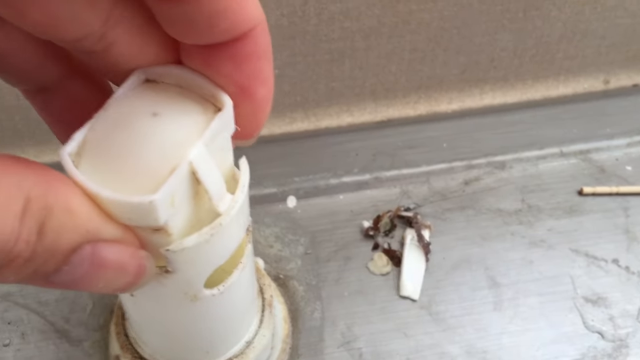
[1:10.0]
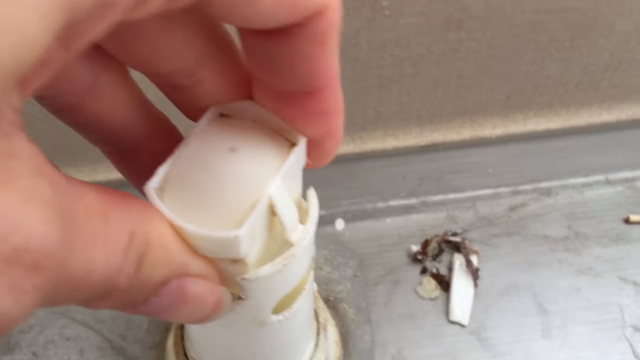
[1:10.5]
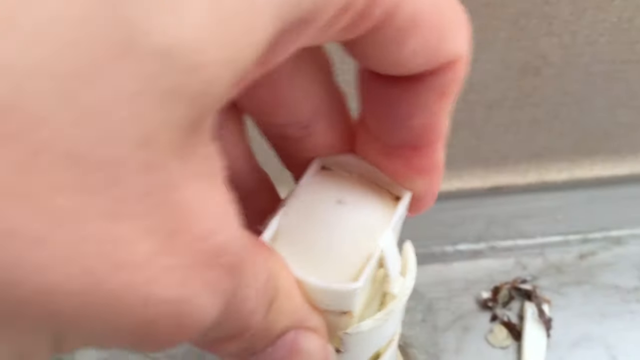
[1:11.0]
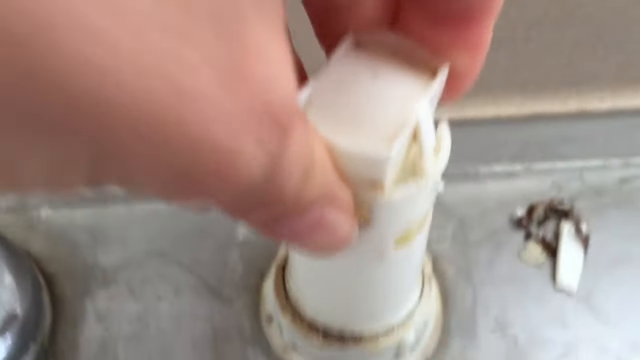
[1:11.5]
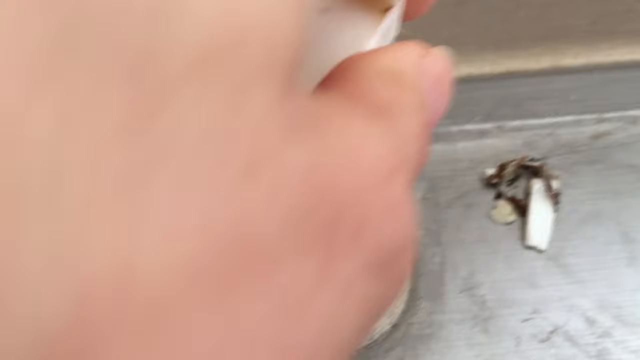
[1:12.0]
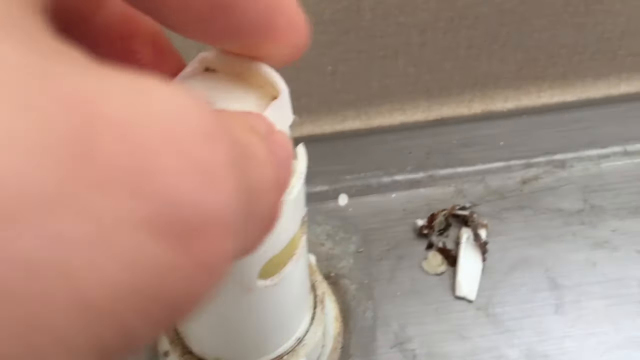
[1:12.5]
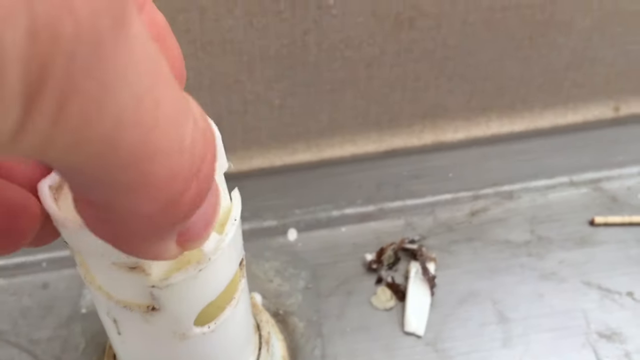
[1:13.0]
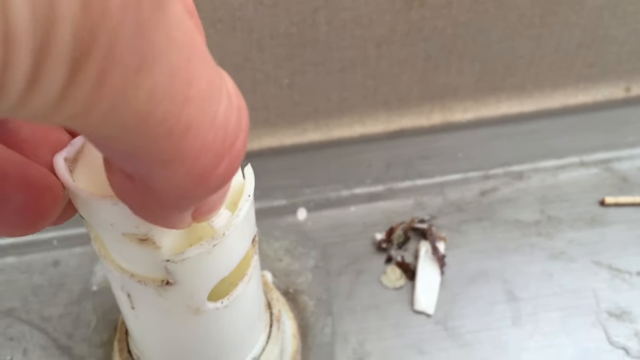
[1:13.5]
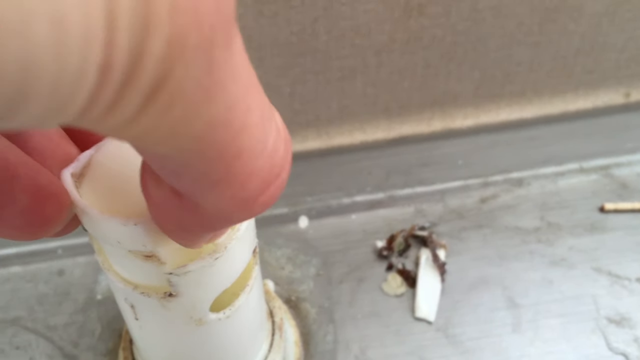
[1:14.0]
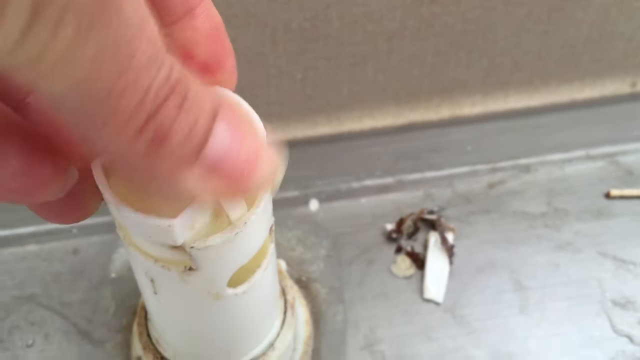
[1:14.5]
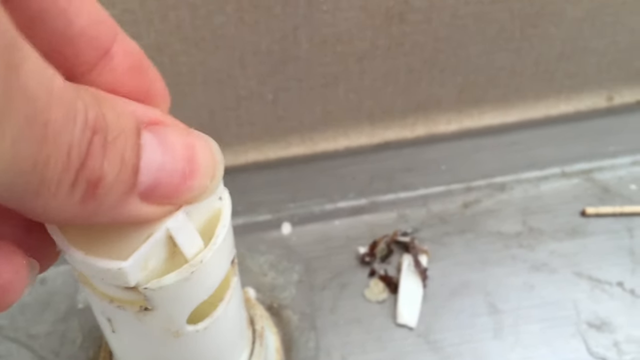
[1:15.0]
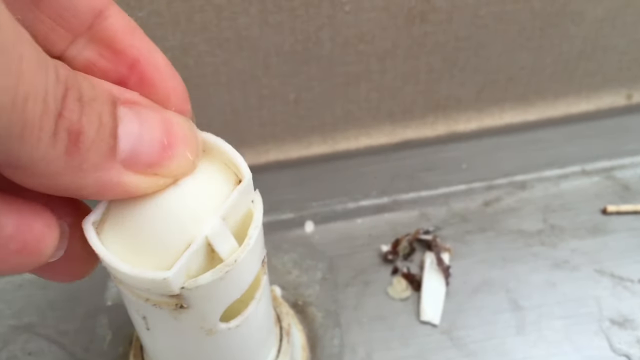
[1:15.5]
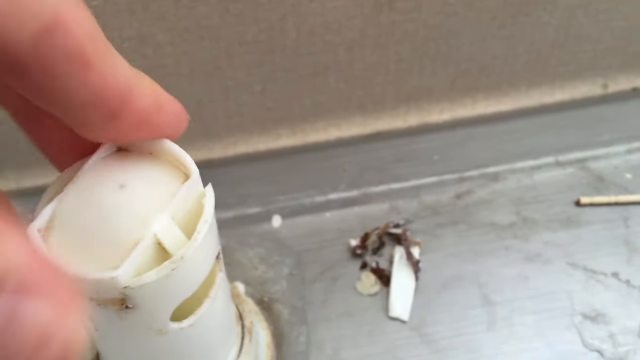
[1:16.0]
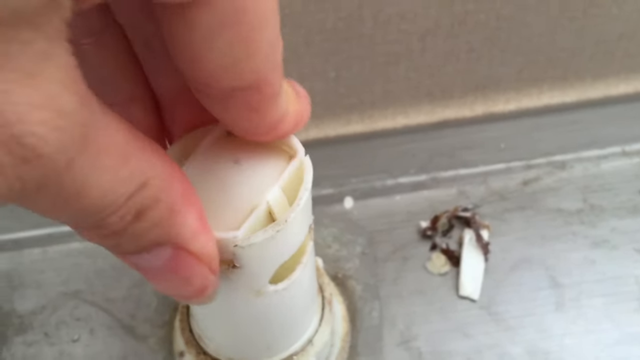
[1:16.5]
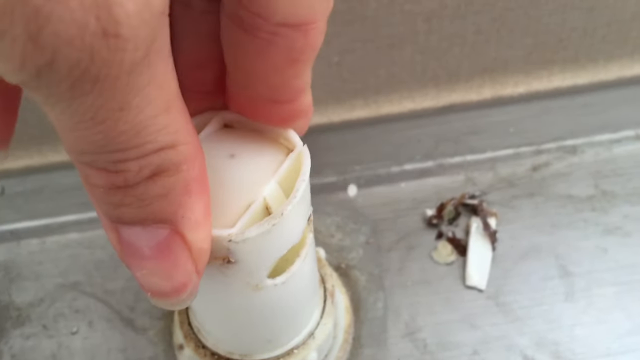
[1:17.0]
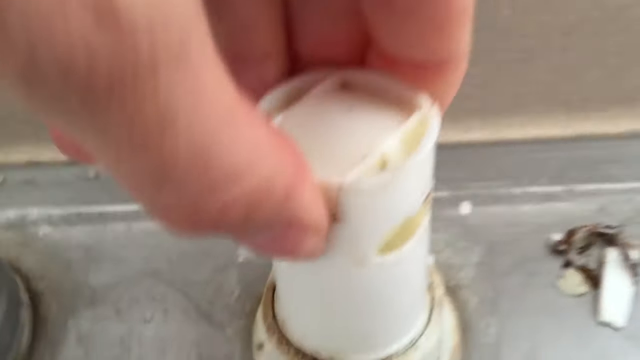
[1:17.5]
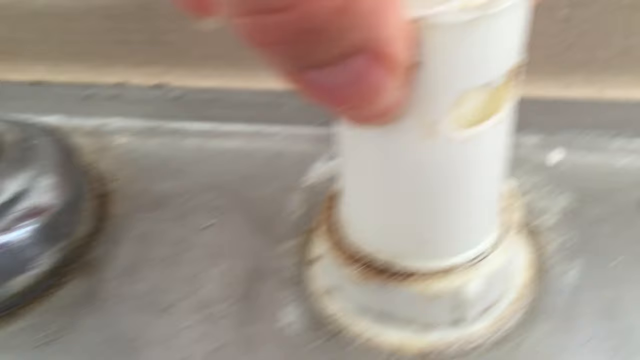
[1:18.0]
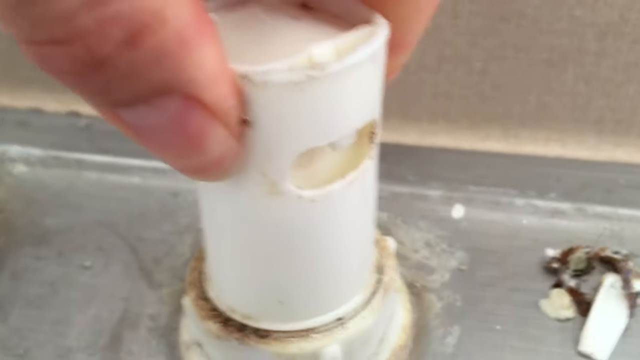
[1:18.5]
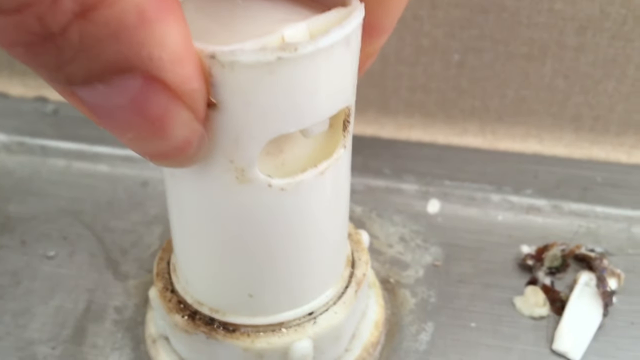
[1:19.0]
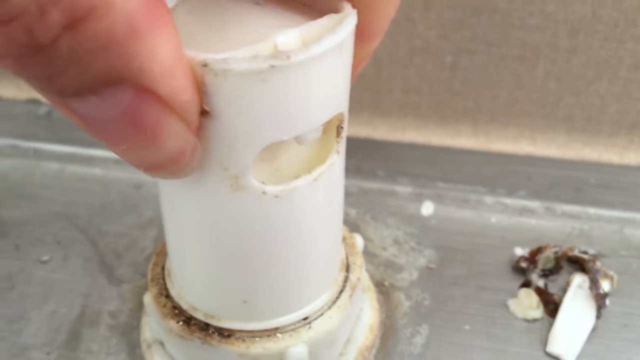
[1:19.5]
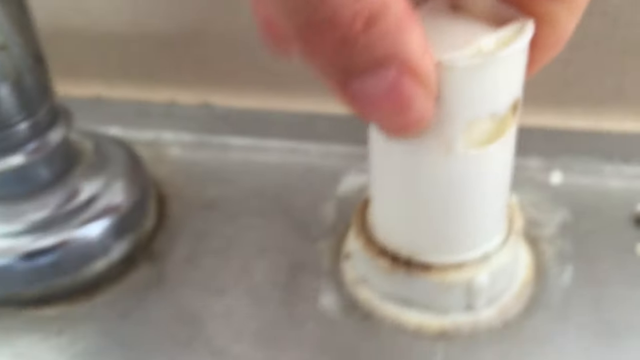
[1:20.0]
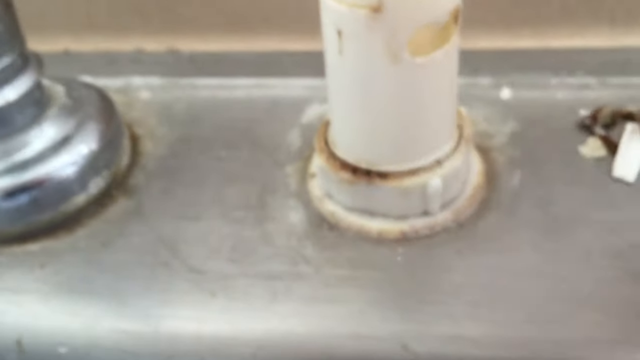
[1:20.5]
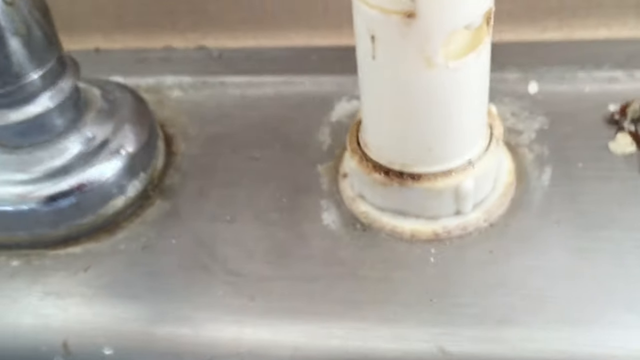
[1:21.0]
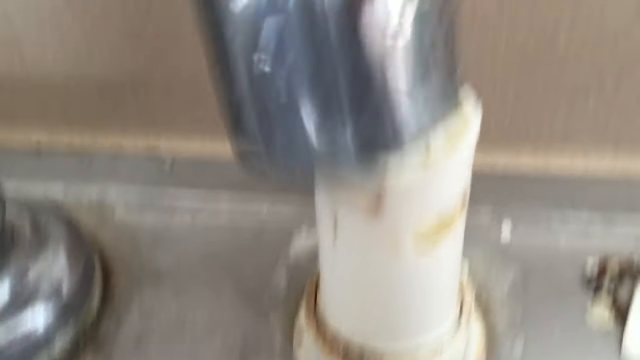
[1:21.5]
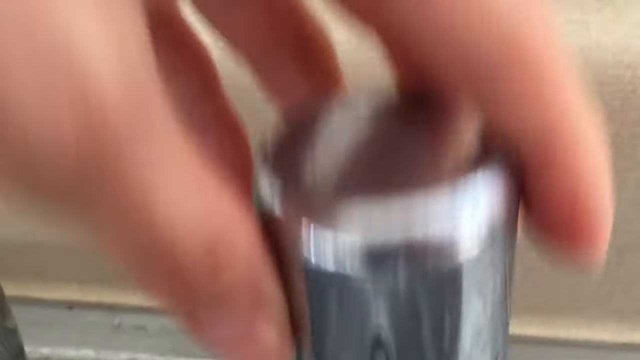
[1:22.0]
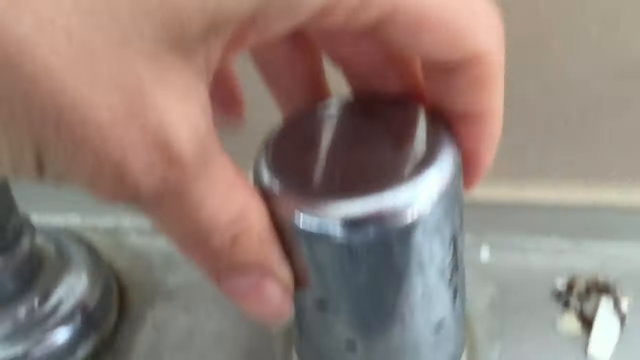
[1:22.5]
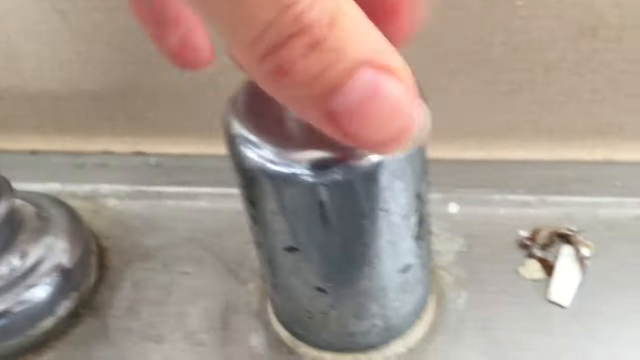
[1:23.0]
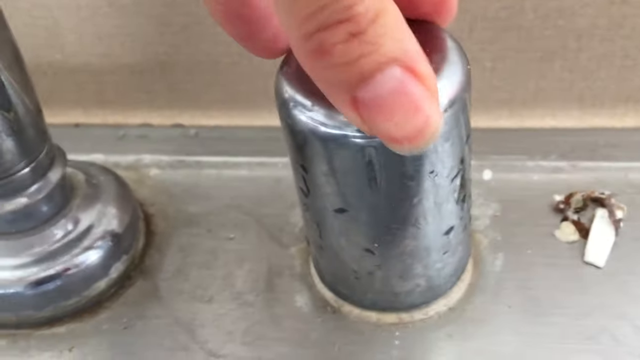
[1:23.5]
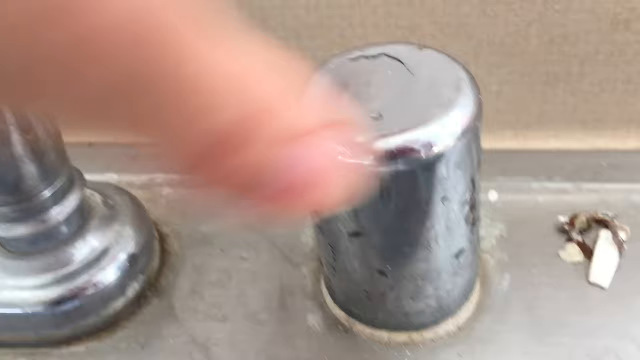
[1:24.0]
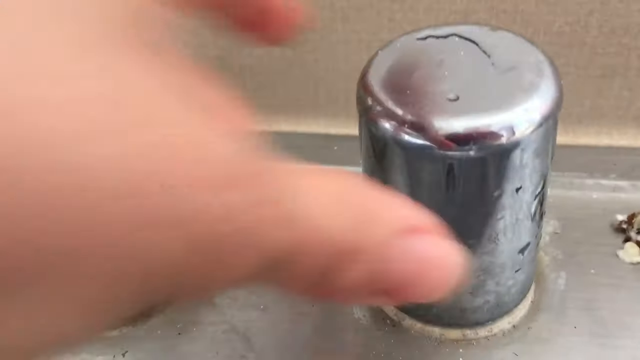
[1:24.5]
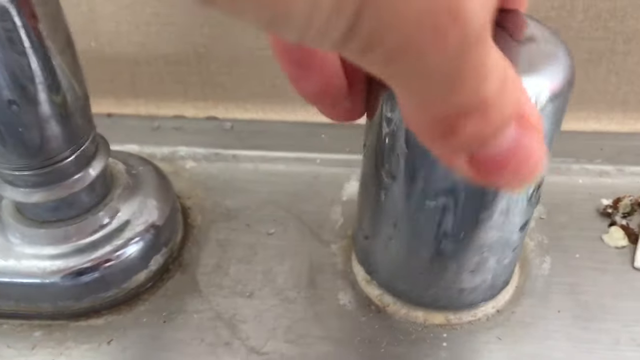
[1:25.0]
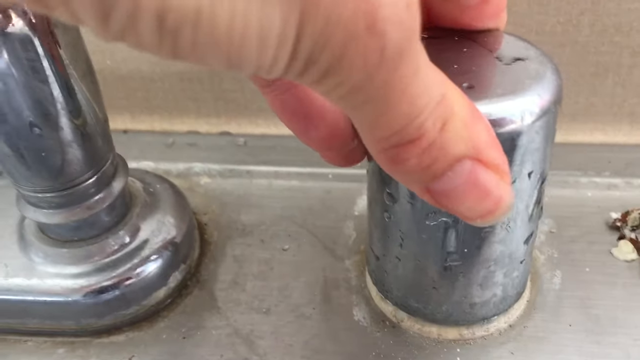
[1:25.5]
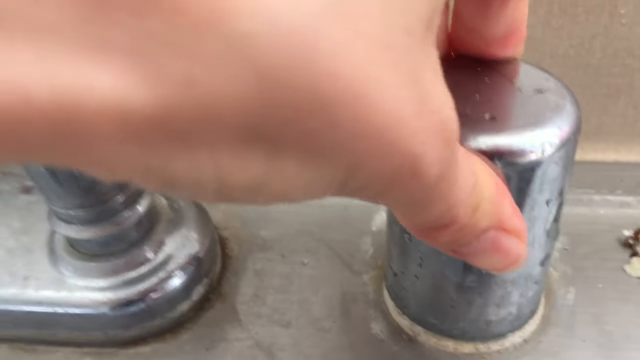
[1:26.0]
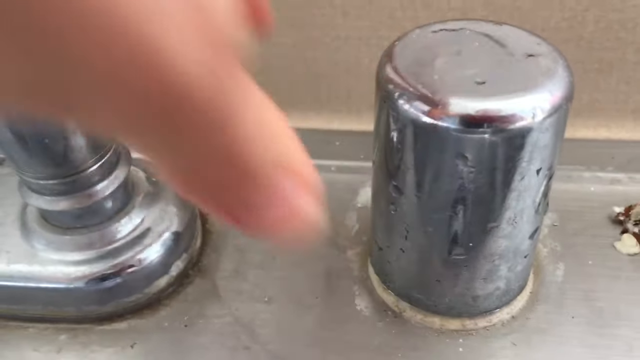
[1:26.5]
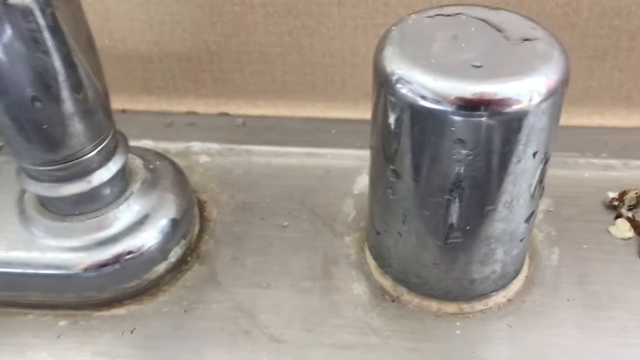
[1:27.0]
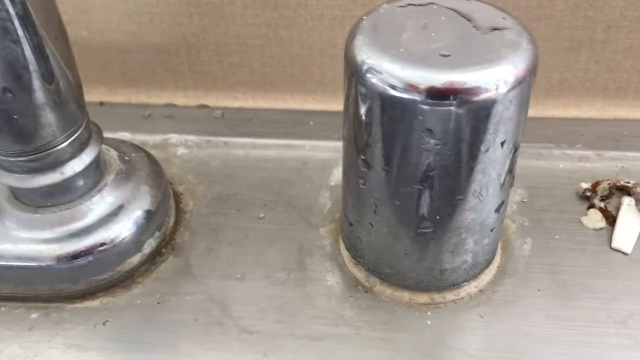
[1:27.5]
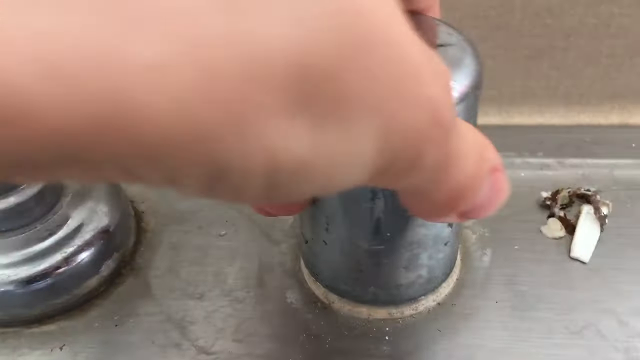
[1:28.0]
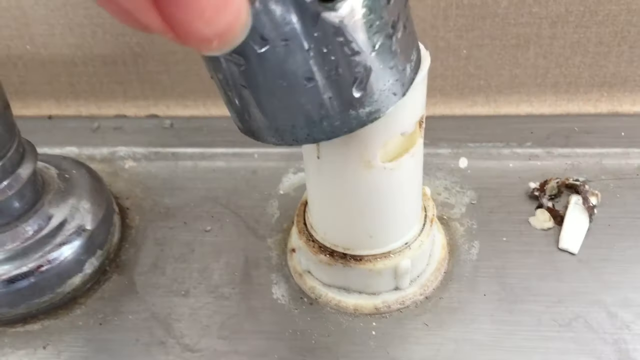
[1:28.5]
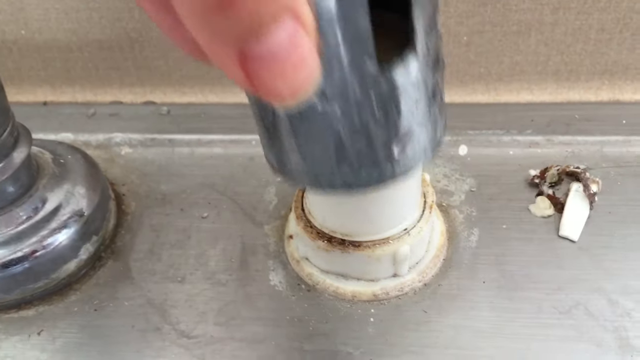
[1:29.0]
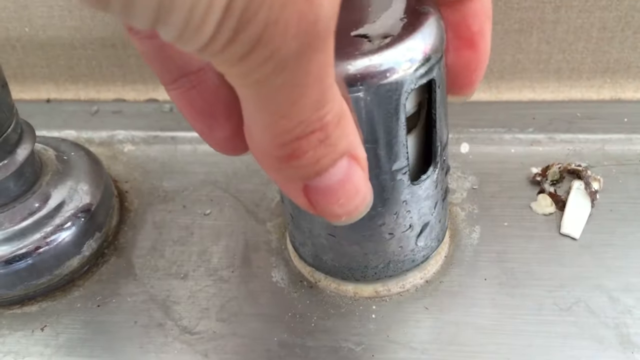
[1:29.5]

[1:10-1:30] A close-up shows the pipe and the cap, which is in the person's left hand, with the gunk in the center of the screen on the right side. The left hand hovers the cap over the pipe and begins to insert it back into position to lock it in place, but it gives some trouble. Placing it with the hand does not work, so the hands are repositioned on the outer side of the cap and some force is applied, with the thumb and index finger pressing down. After some force and wiggling, the cap secures itself and locks into place. The left hand then grabs the stainless steel cap cover and places it back down over the pipe. After the hand is taken away, the cover is not in position as it should be, so the left hand goes back onto the stainless steel cap, adjusts it and pushes it down to make it snug. The hand then comes back, lifts the cap off, places it back down and readjusts it so it is in the correct place, showing the visible cutout on the stainless steel cap.